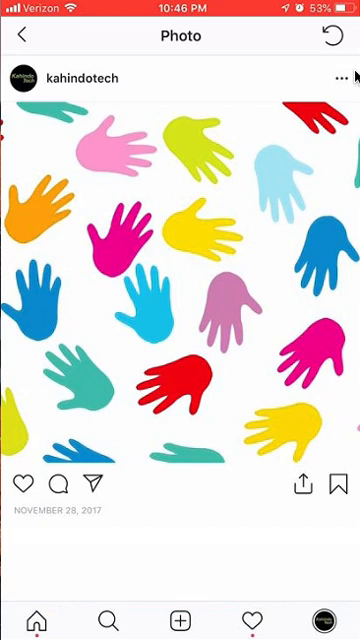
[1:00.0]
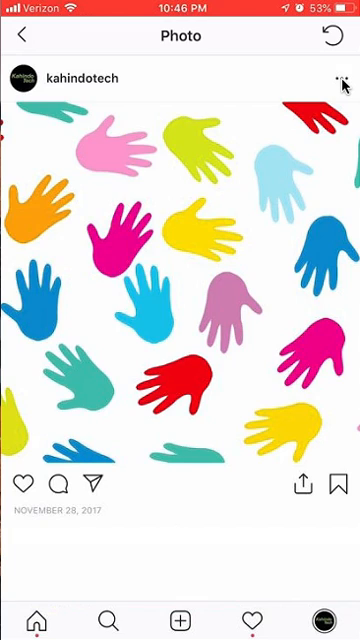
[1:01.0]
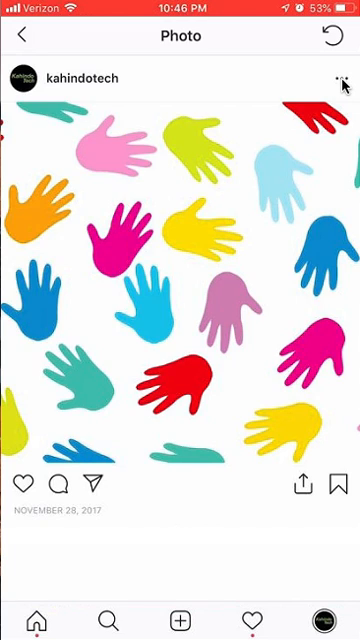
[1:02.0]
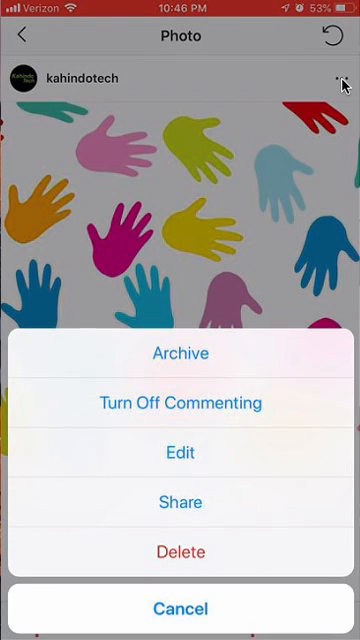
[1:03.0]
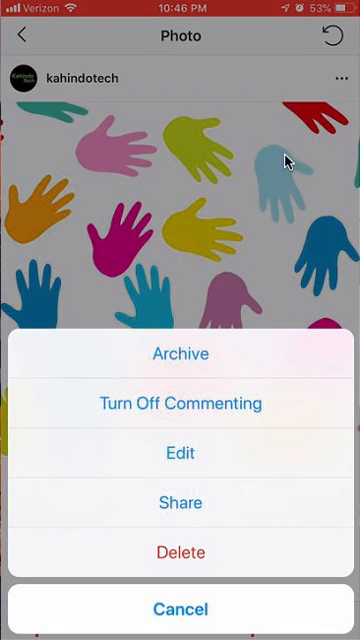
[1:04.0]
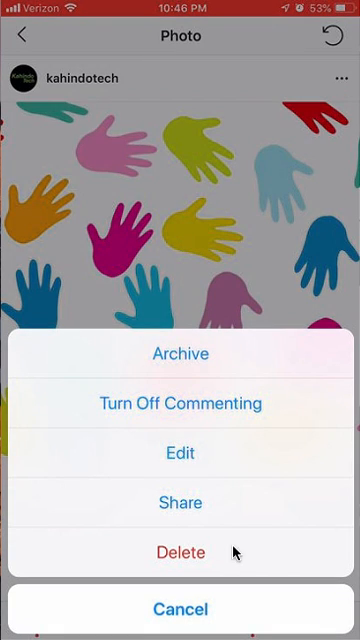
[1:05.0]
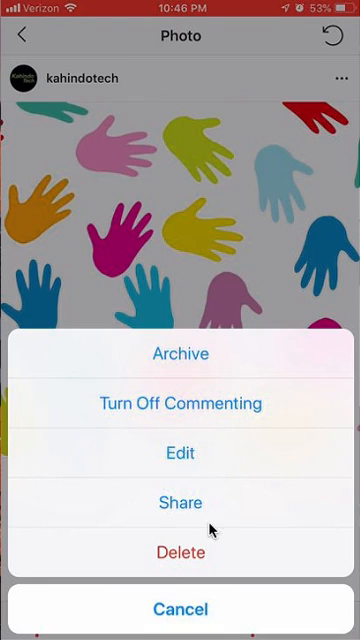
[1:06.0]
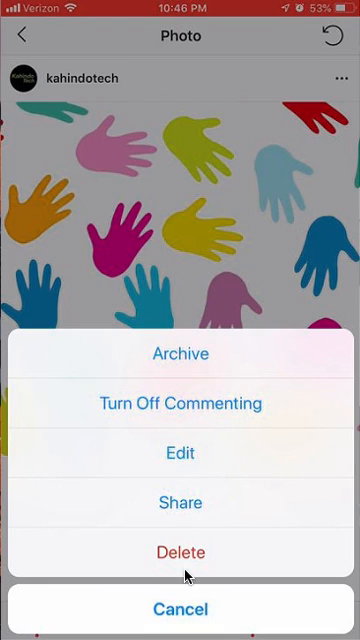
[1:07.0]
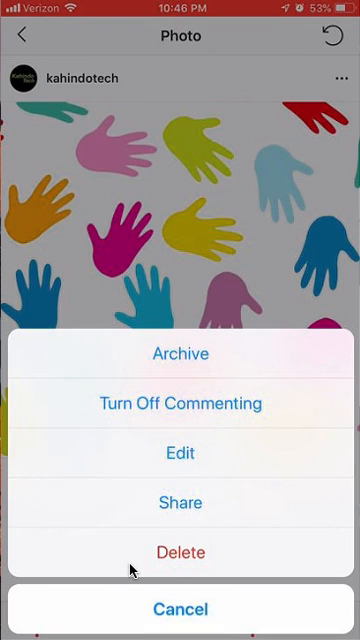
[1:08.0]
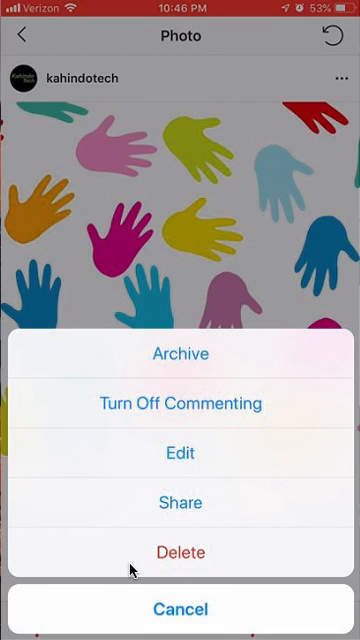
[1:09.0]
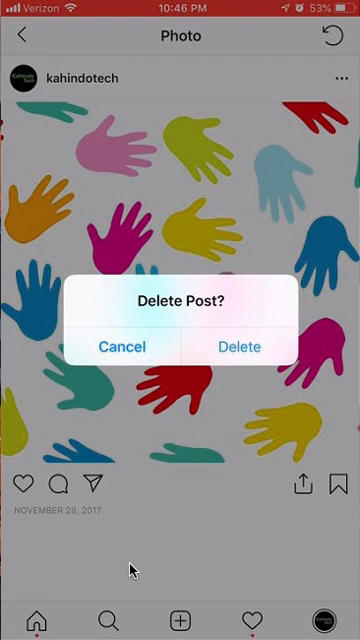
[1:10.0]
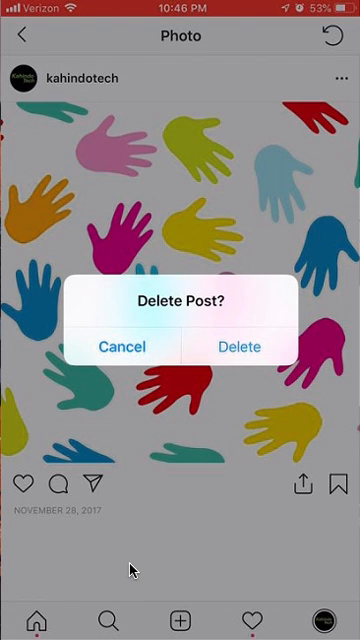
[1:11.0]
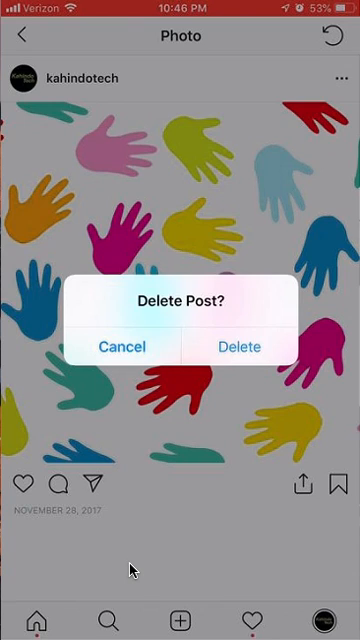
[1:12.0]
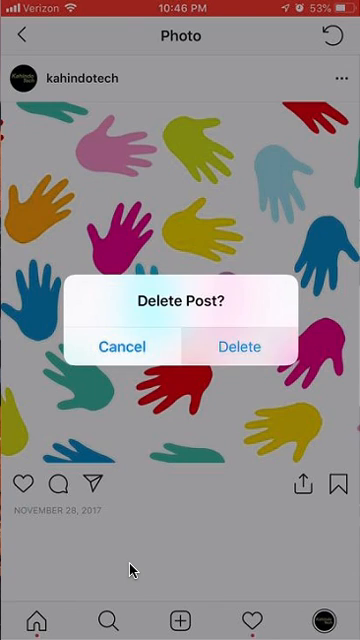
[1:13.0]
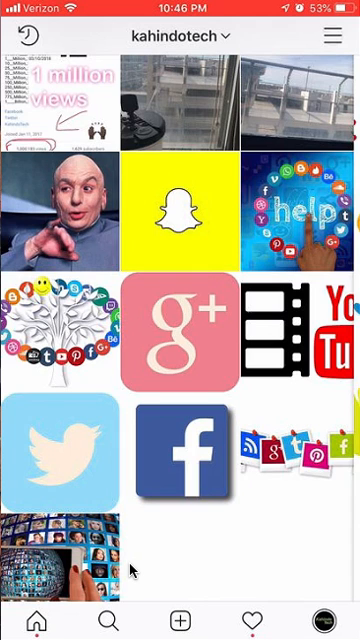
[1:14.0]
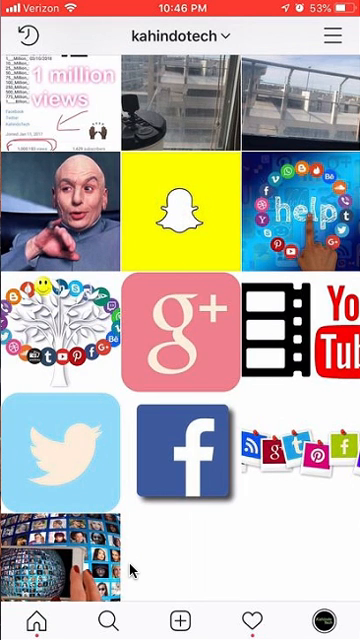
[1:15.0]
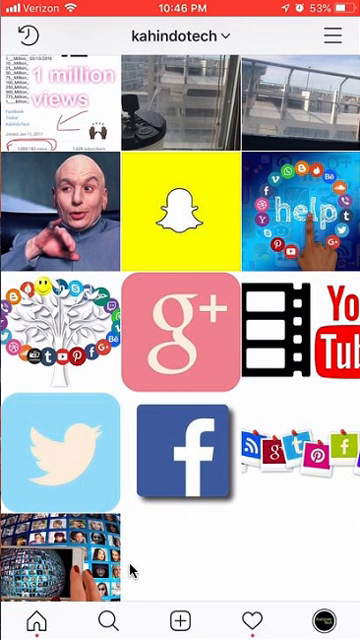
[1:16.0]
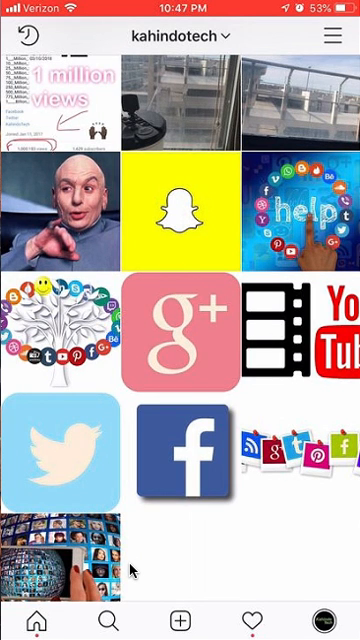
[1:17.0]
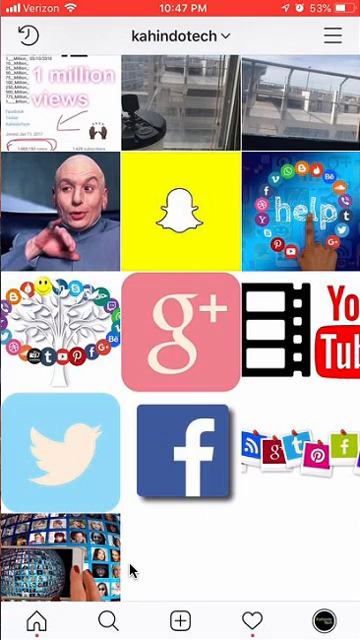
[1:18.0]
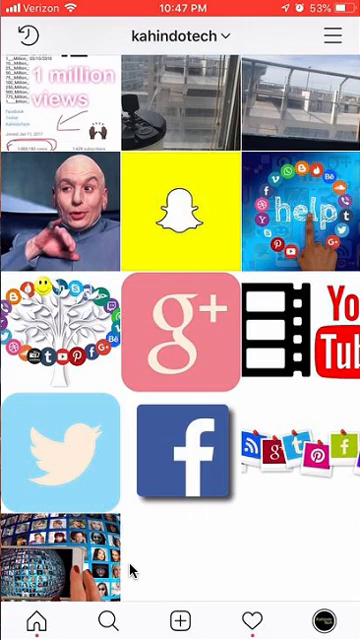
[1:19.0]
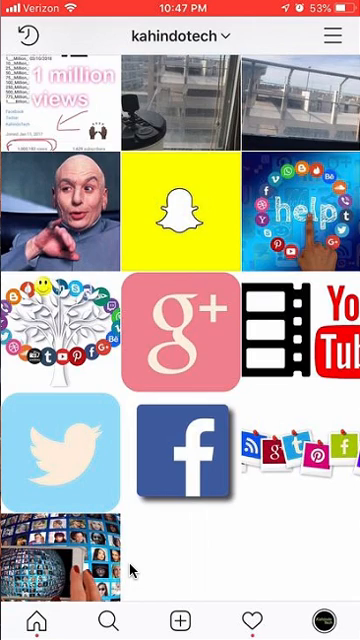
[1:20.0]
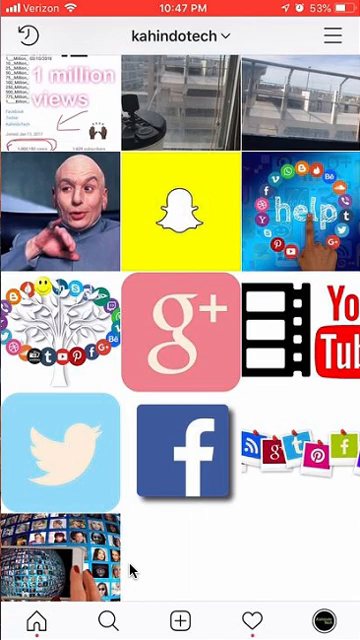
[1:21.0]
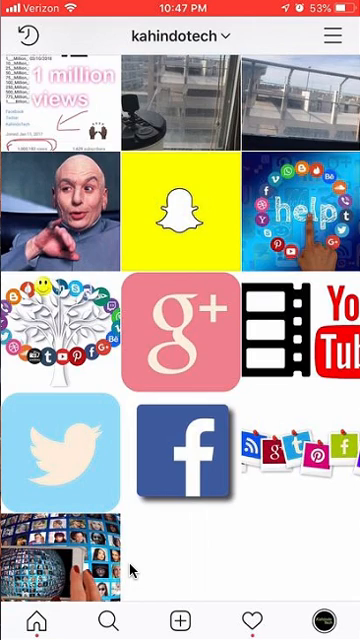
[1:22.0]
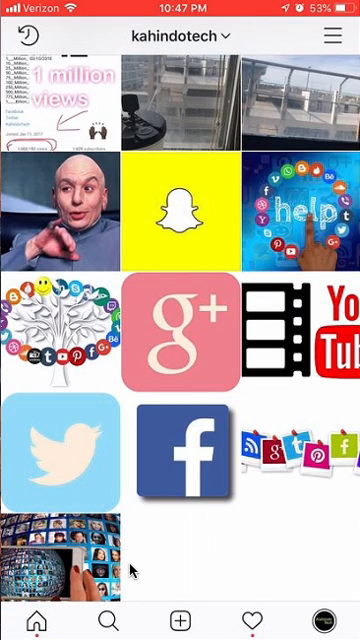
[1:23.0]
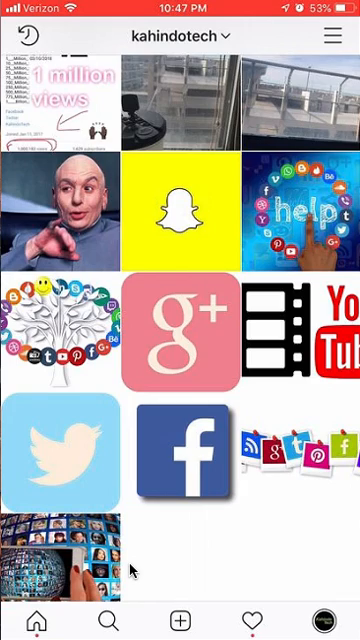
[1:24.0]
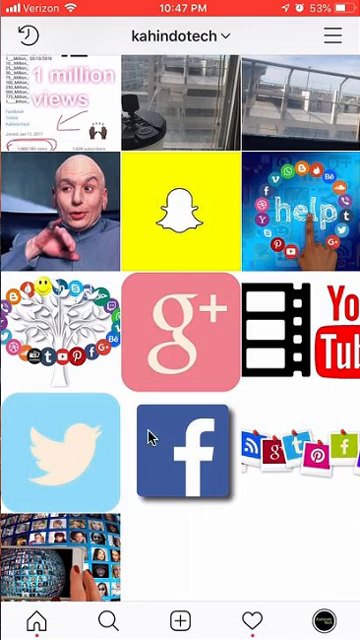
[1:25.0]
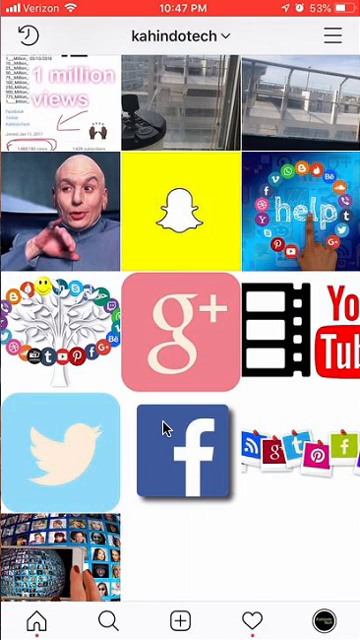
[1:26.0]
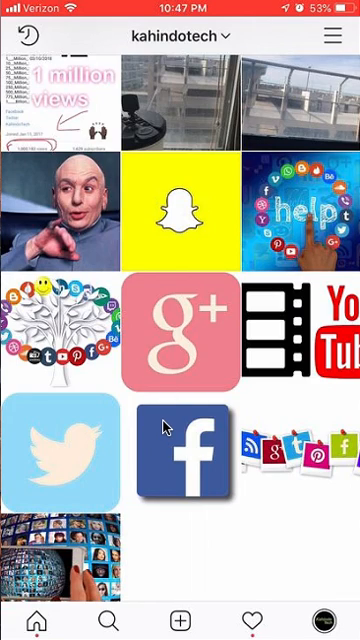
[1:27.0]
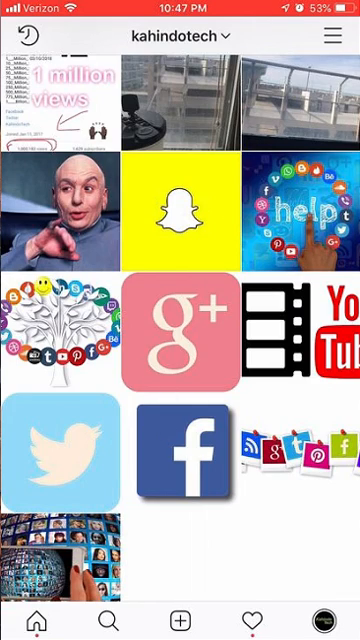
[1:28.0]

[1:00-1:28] A mobile device screen shows a red horizontal strip across the top, with the Verizon wireless logo at the upper left, the time 10.46 PM in the middle, and a battery status of 53% on the right. Below, on the white background of the rest of the screen, the word "photo" is written in the middle, with a back arrow to the left and a refresh icon to the right. Beneath that, the Instagram page name Kahindotech is written on the left side, and below the name is an image of many human hands, a graphical illustration in yellow, green, orange, red, deep red and blue. A black mouse pointer crosses the screen and hovers on the three black dots below the refresh icon. A pop-up appears at the bottom of the screen listing, from top to bottom, the commands "archive", "turn off commenting", "edit", "share", "delete" and "cancel". The pointer moves downwards and circles "delete", which is written in red text, then selects it. The commands disappear and a pop-up appears across the image of the colorful hands, reading "delete post", "cancel", "delete". The word "deleting" then appears as the delete button has been selected.